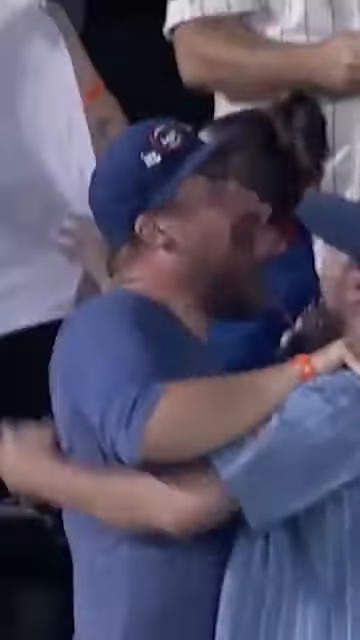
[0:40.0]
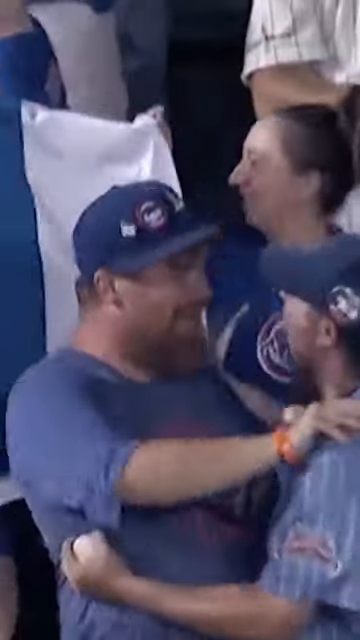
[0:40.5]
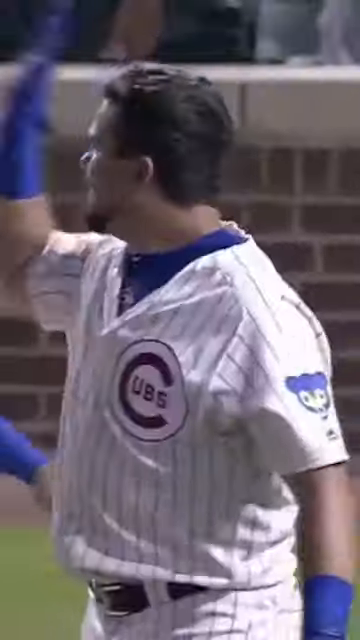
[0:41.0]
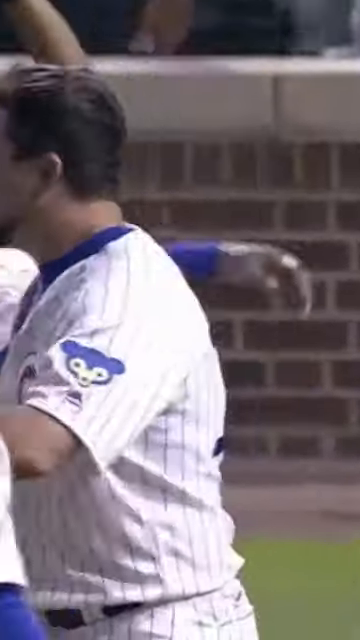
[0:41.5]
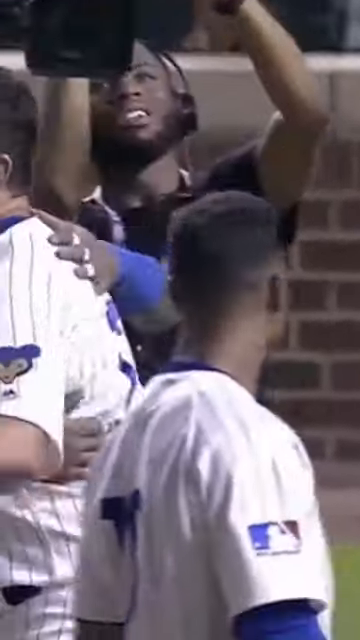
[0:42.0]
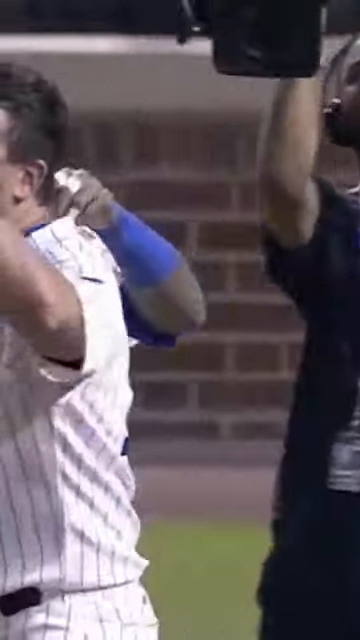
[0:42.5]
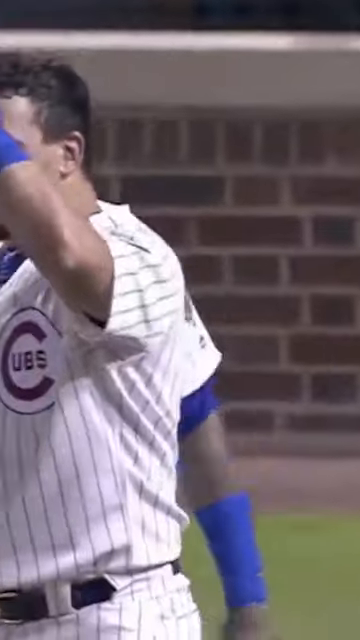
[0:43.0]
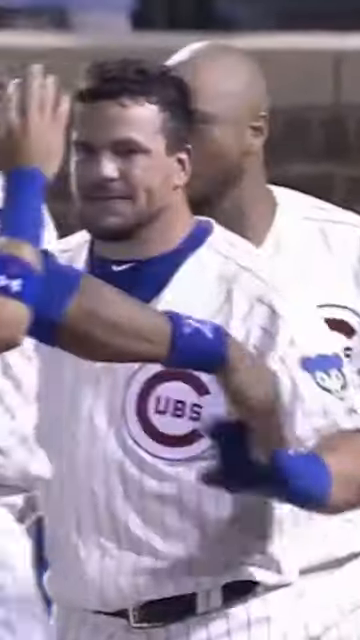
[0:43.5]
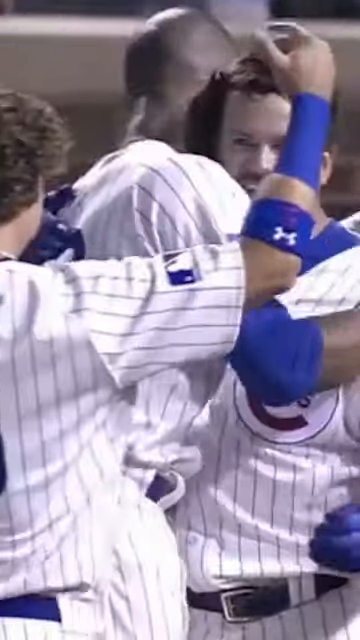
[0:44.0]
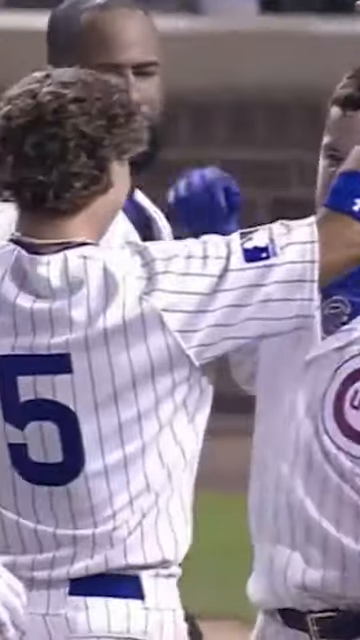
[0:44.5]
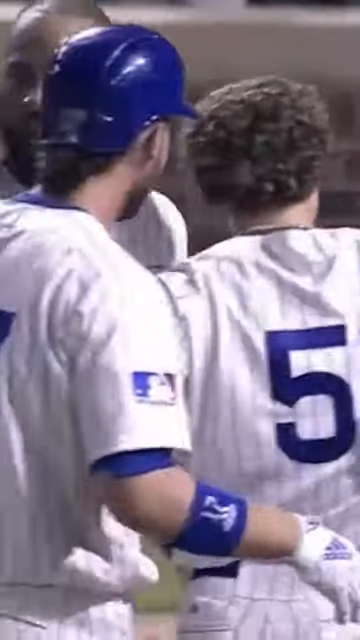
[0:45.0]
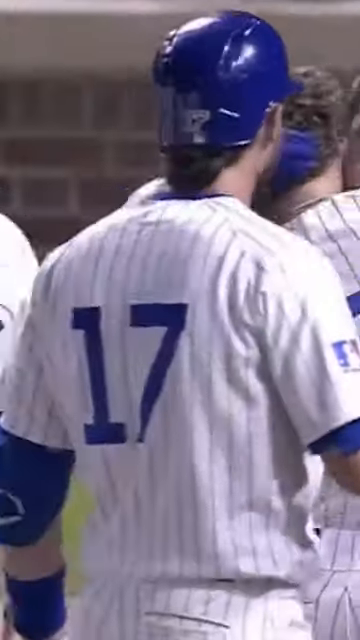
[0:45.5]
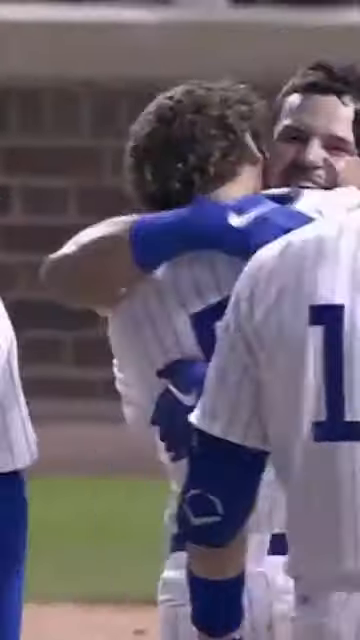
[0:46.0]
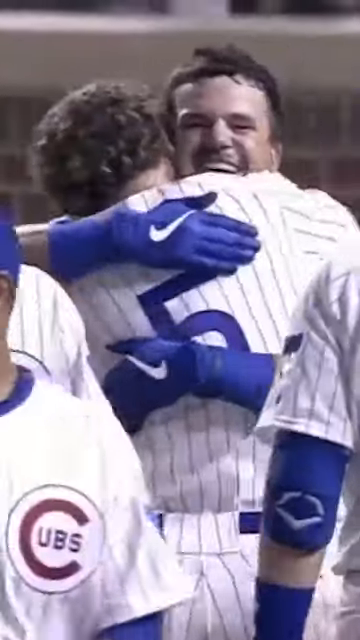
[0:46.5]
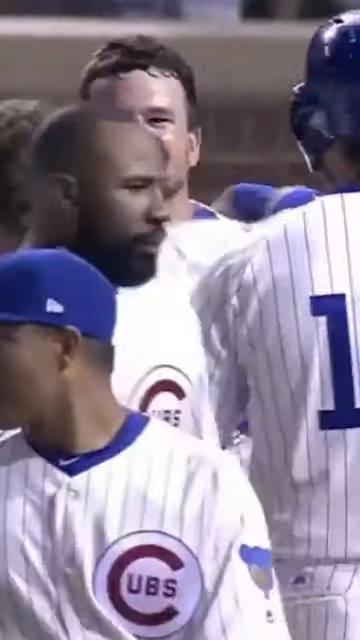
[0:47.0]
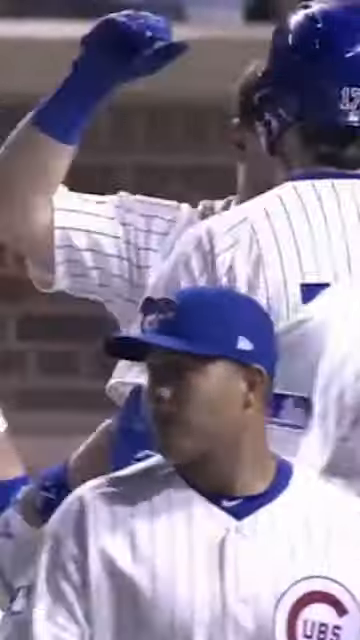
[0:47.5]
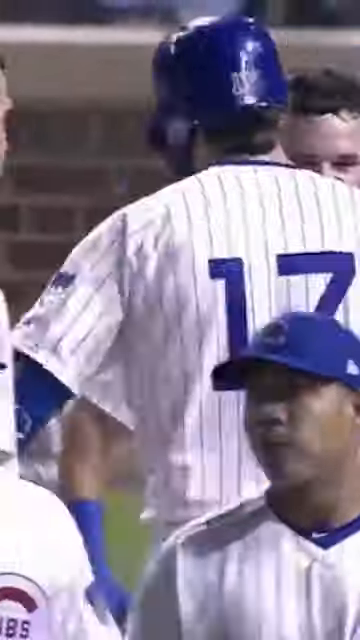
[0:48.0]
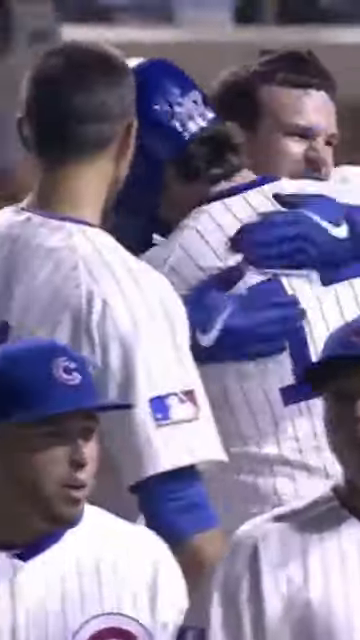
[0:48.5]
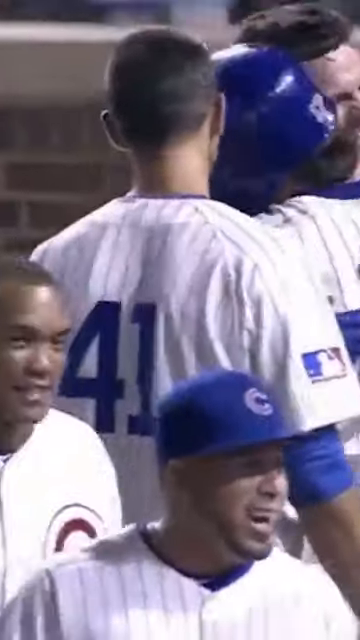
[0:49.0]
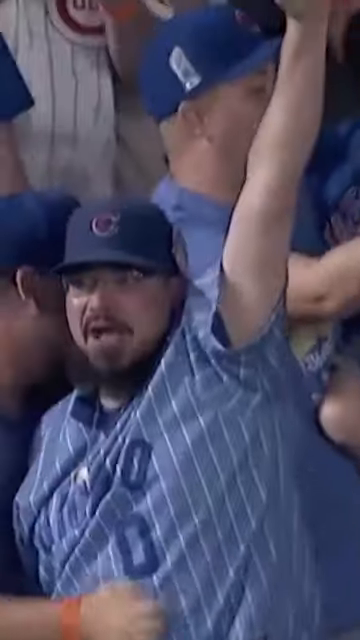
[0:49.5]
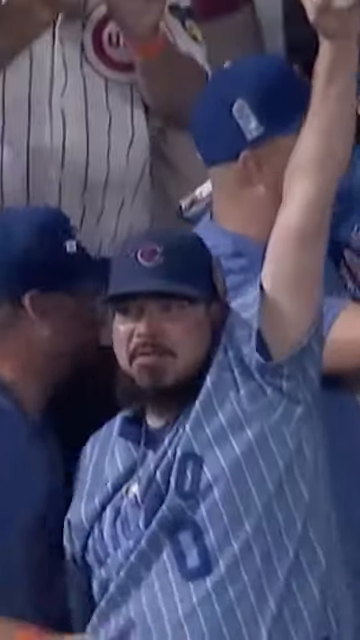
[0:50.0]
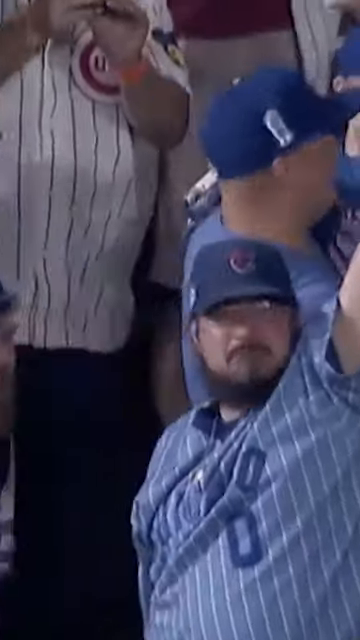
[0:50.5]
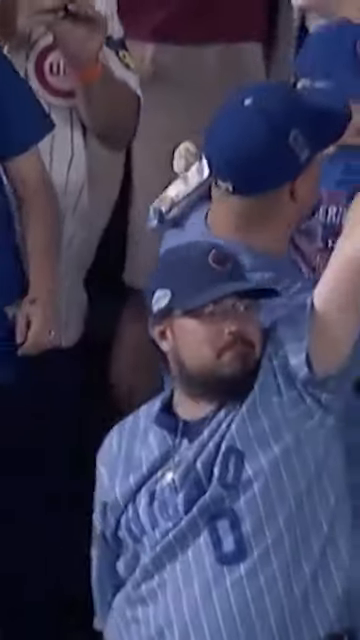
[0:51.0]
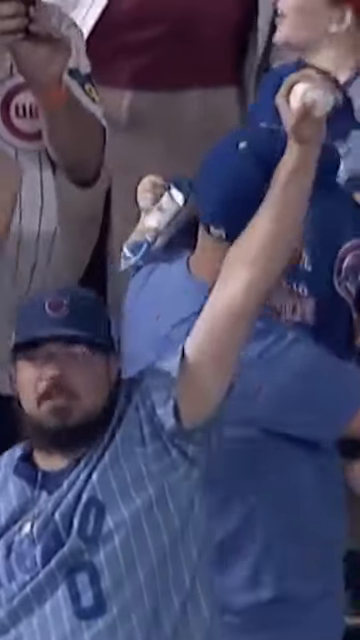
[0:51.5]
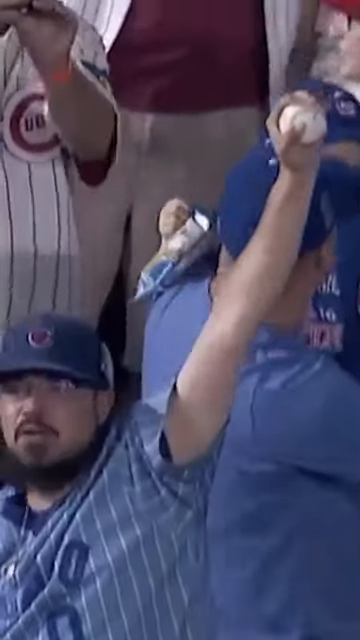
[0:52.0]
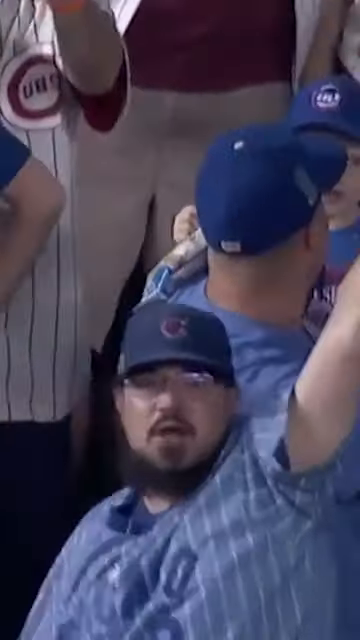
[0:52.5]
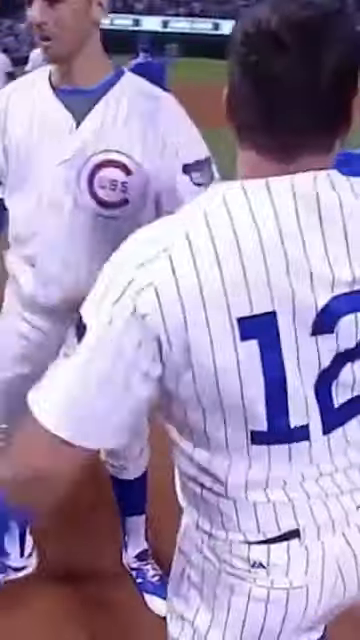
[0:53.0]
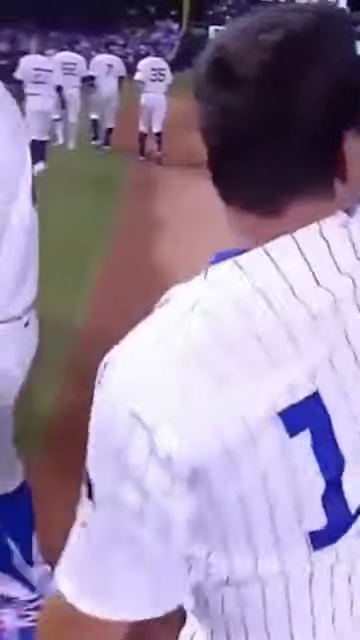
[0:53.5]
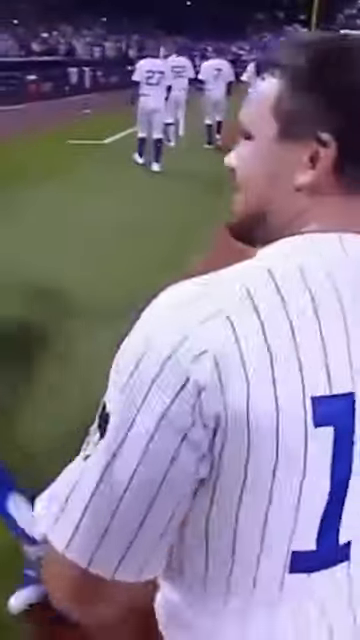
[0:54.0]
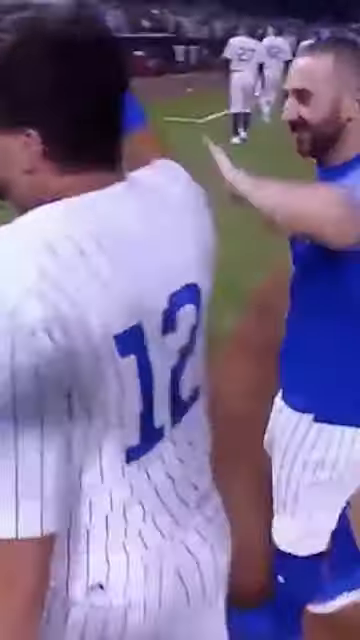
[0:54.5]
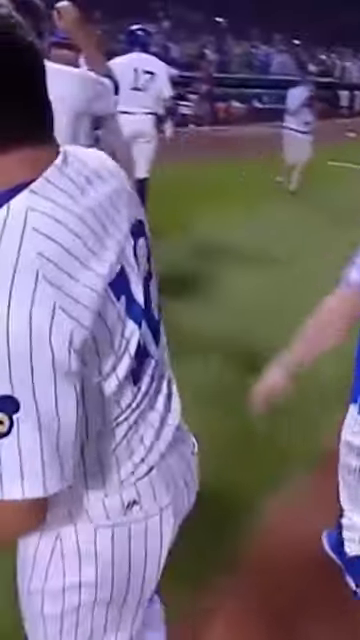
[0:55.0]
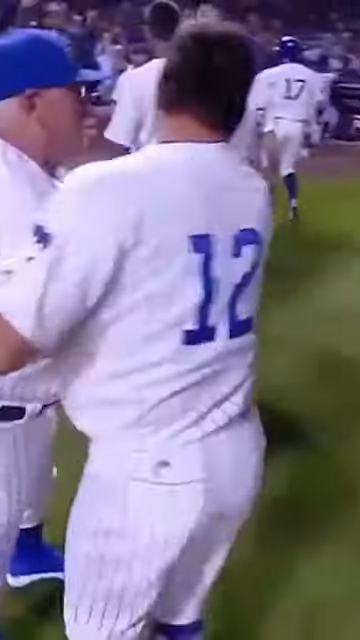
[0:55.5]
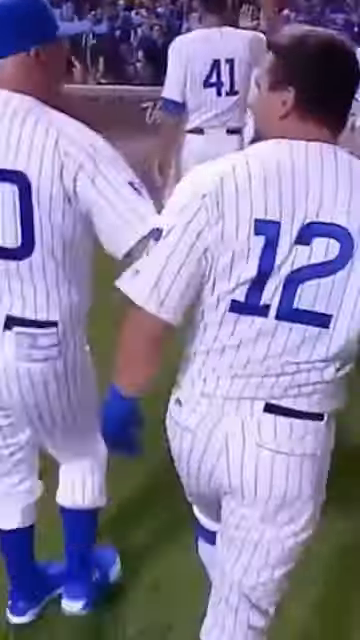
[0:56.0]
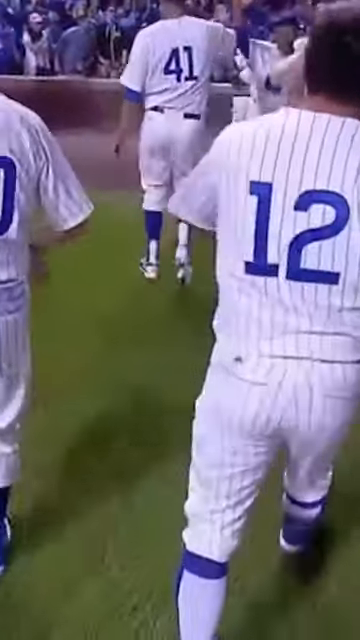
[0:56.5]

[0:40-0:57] More of the fan hugging is shown, and number 12, possibly named Cal Sharper, is hugging as well. Fans hold up the ball. It looks like the game is over, apparently after a walk-off home run, possibly in the bottom of the ninth or extra innings. The fans are excited and the Chicago Cubs players are very happy. The fan who caught the ball appears to be a Caucasian man wearing a blue hat and blue shirt, with facial hair and a bit of a beard. Everybody looks very excited.